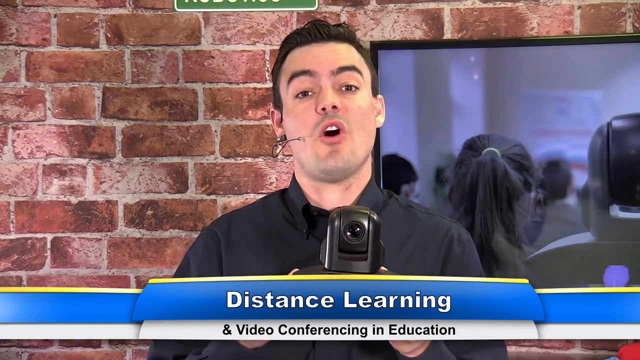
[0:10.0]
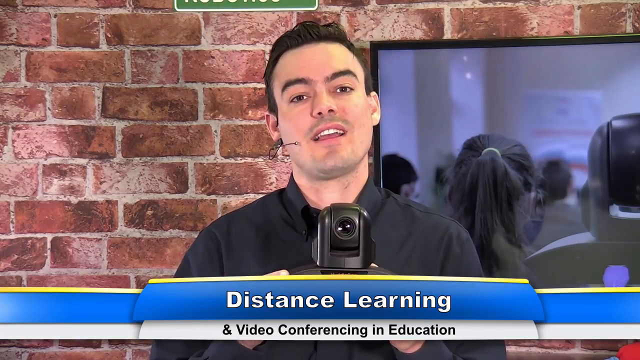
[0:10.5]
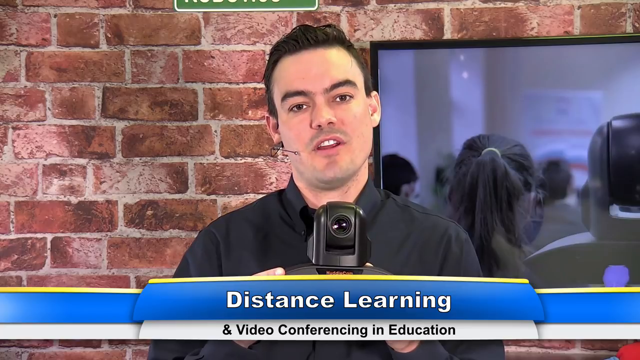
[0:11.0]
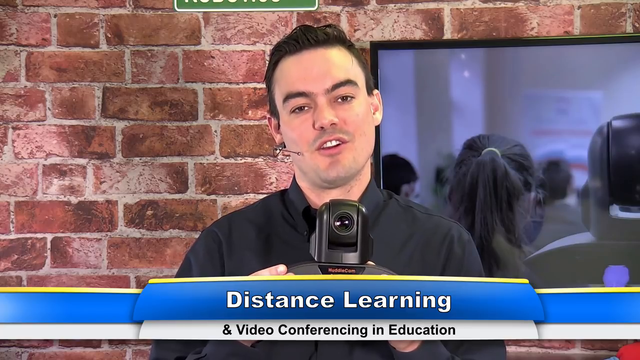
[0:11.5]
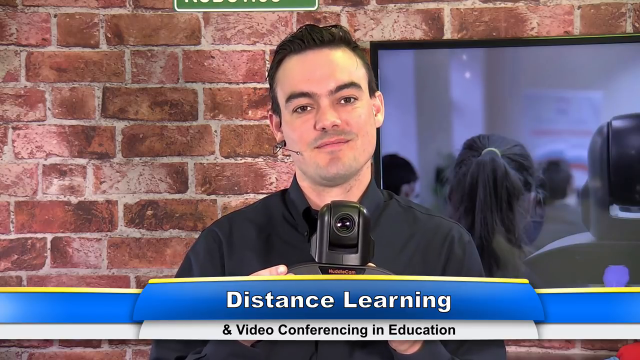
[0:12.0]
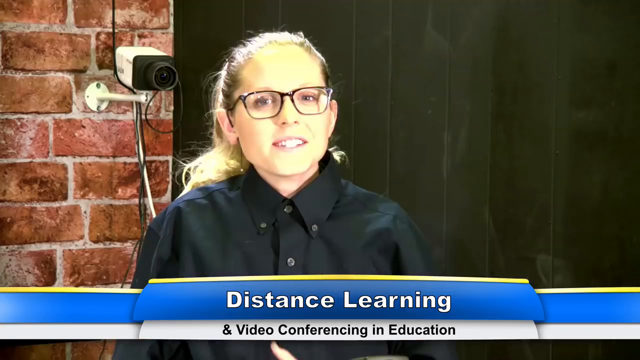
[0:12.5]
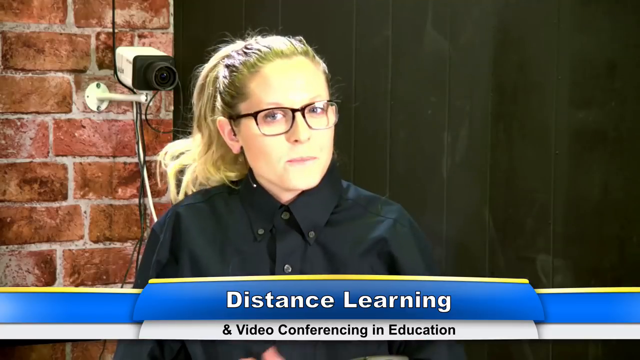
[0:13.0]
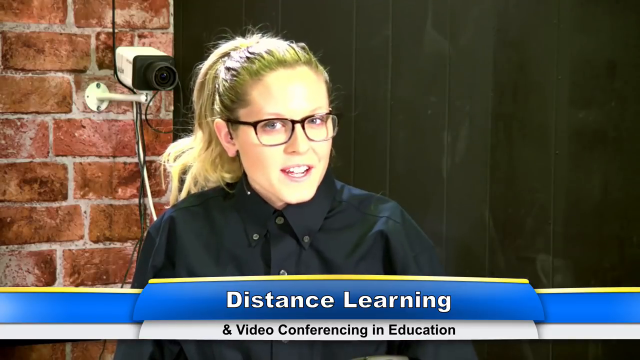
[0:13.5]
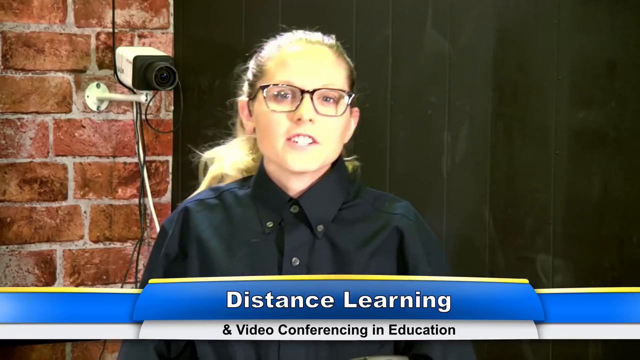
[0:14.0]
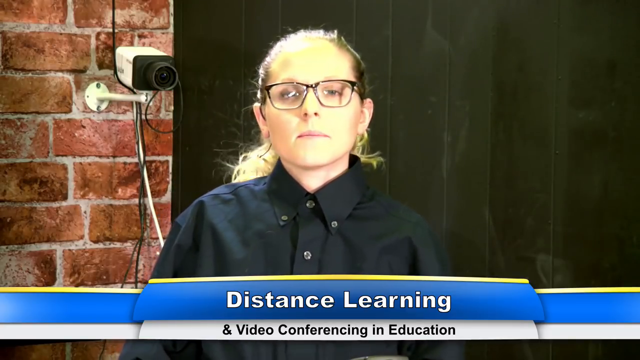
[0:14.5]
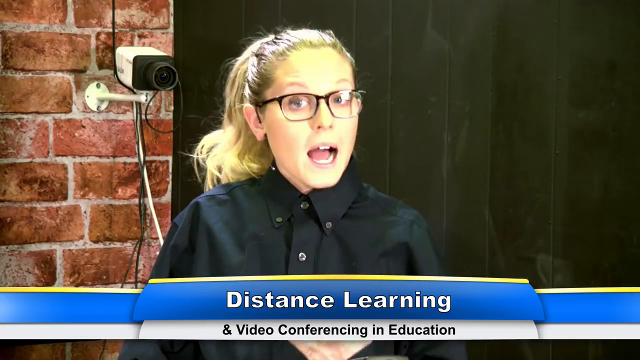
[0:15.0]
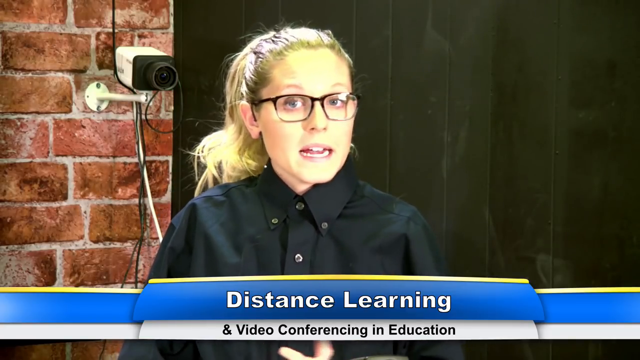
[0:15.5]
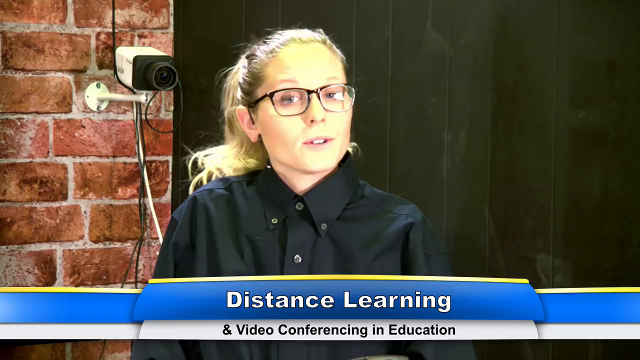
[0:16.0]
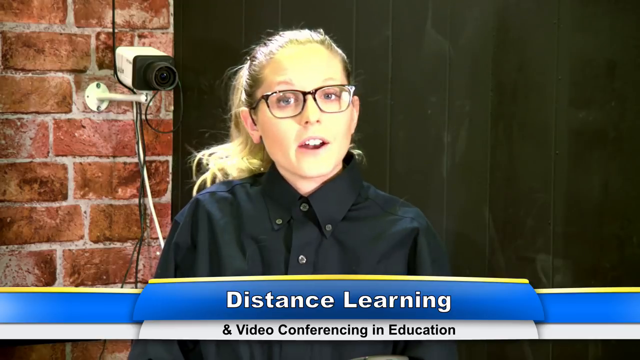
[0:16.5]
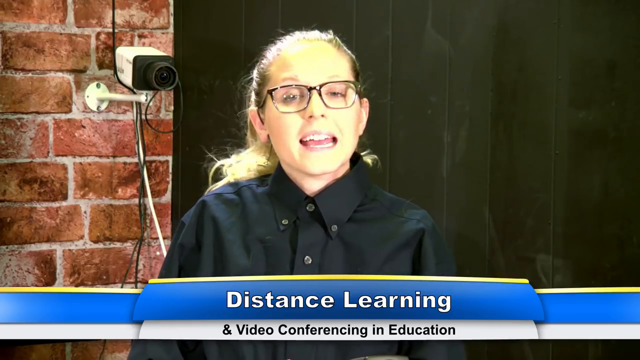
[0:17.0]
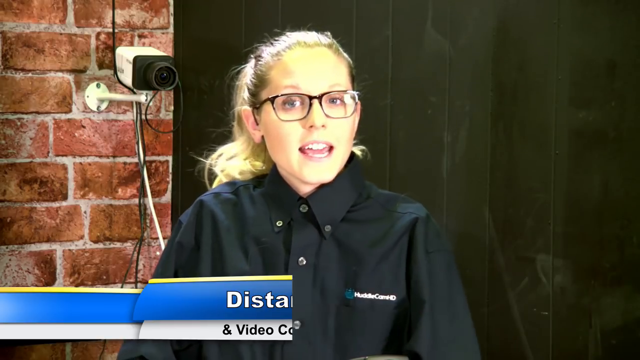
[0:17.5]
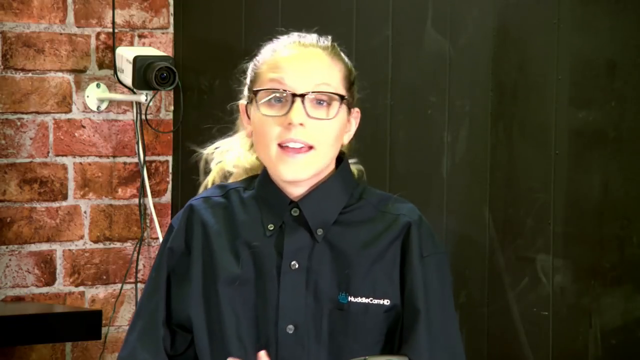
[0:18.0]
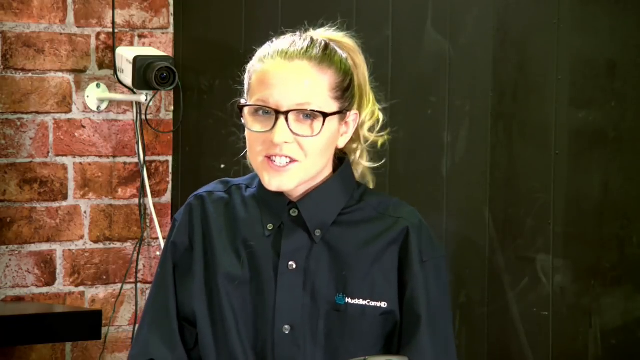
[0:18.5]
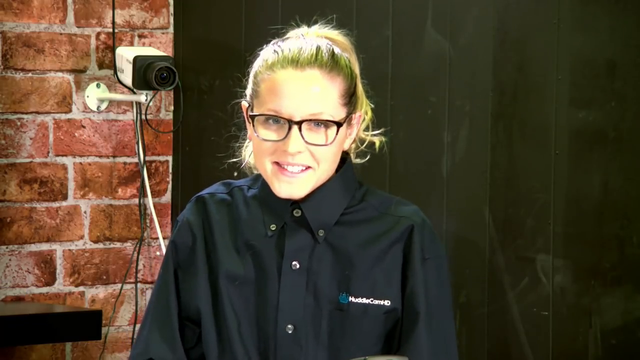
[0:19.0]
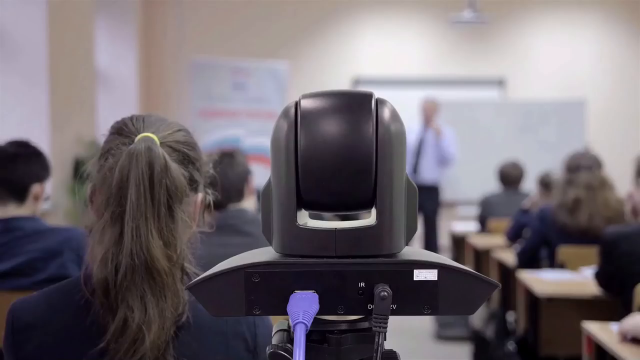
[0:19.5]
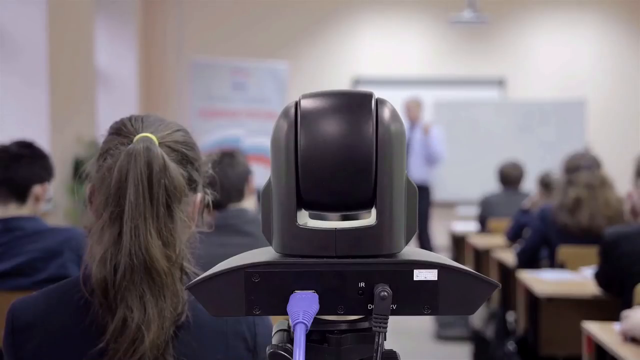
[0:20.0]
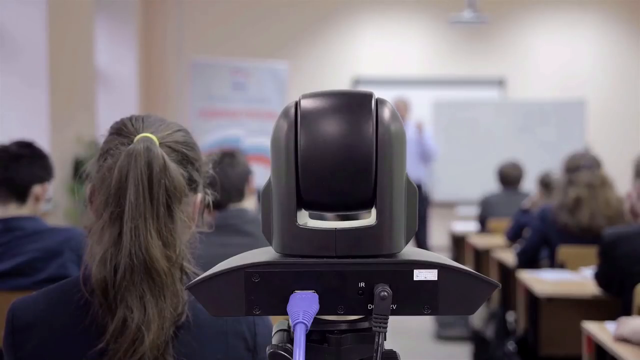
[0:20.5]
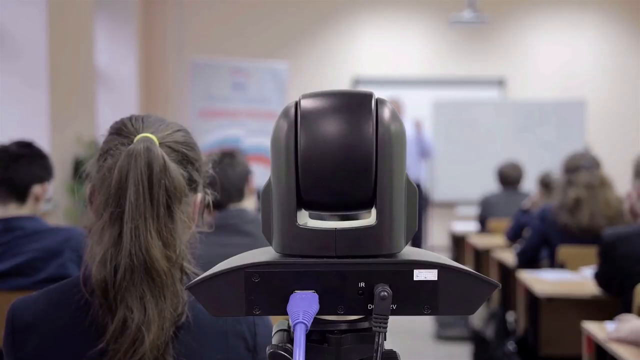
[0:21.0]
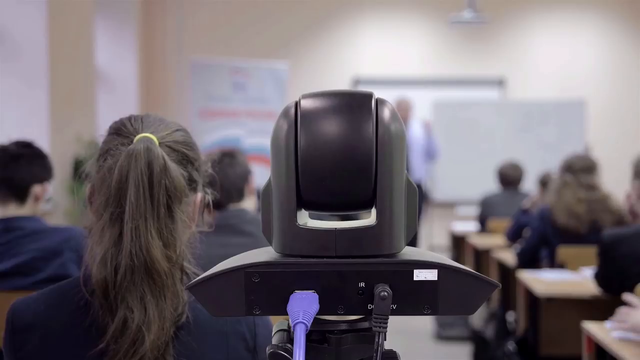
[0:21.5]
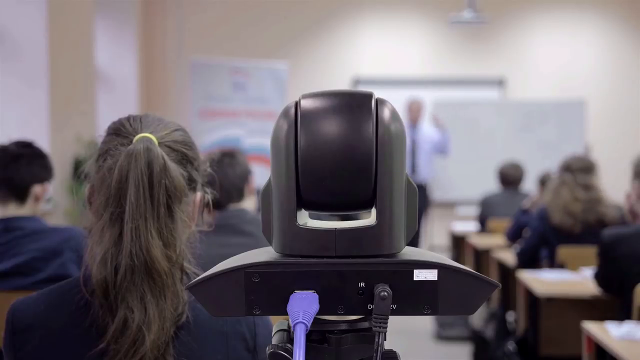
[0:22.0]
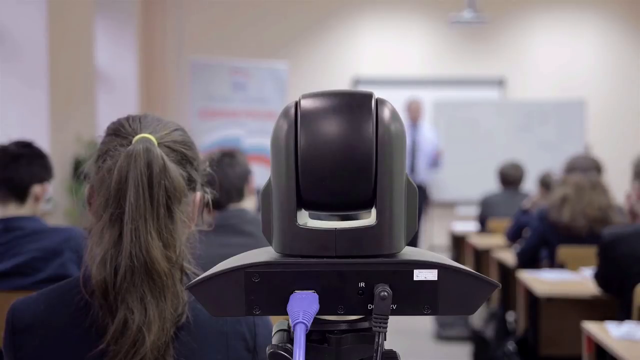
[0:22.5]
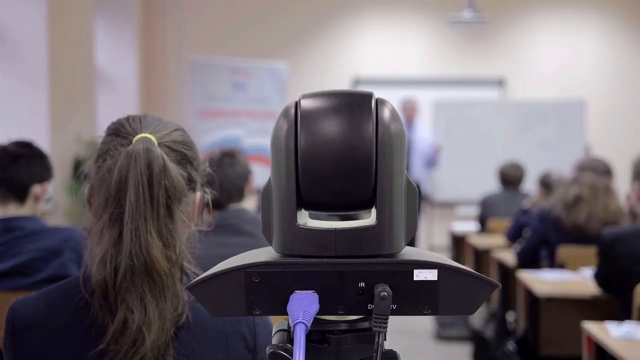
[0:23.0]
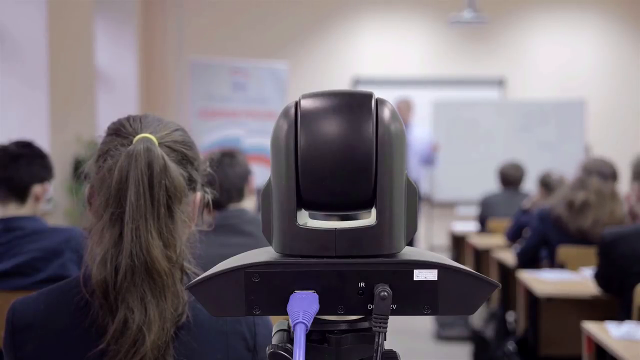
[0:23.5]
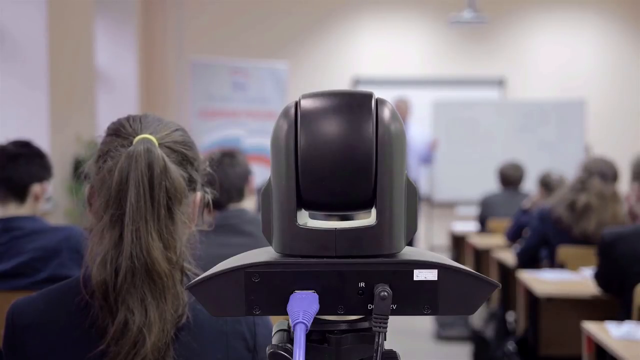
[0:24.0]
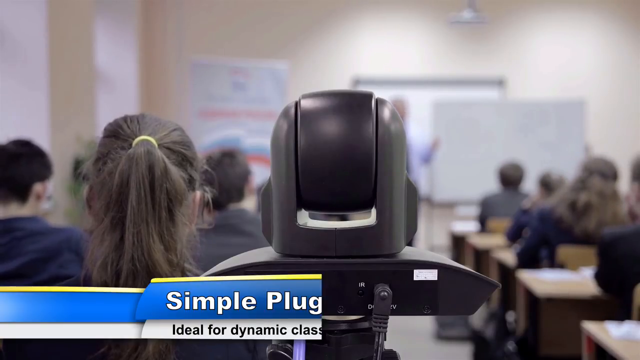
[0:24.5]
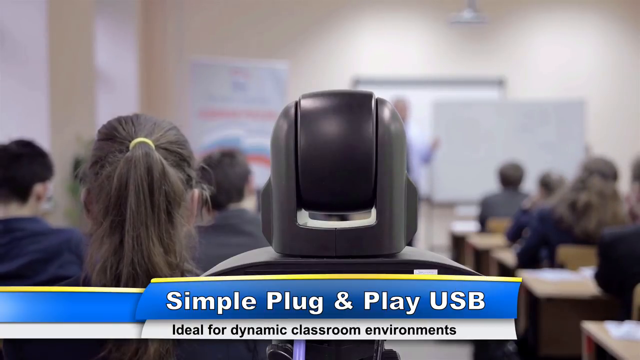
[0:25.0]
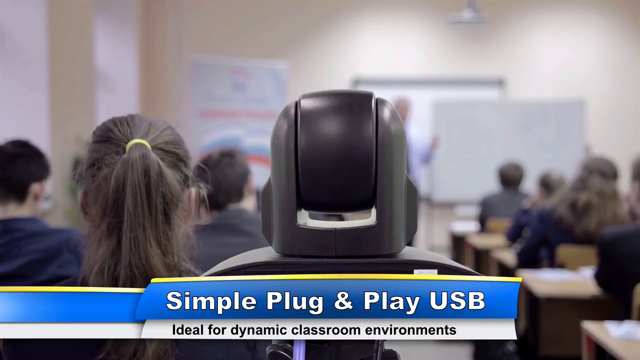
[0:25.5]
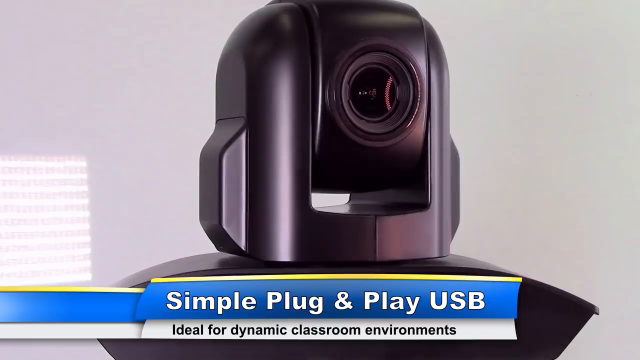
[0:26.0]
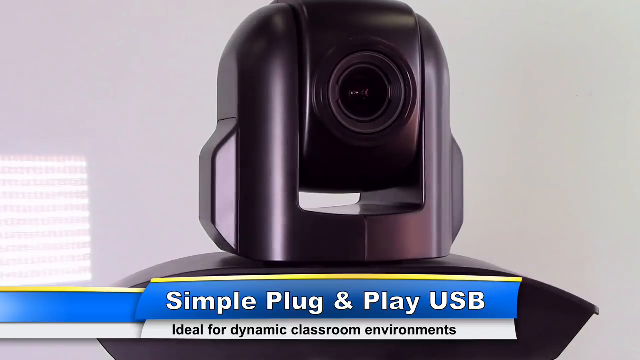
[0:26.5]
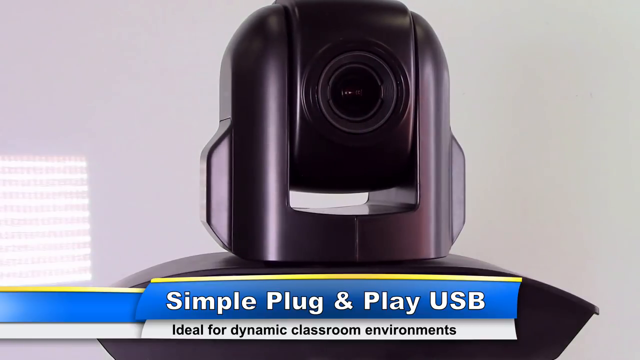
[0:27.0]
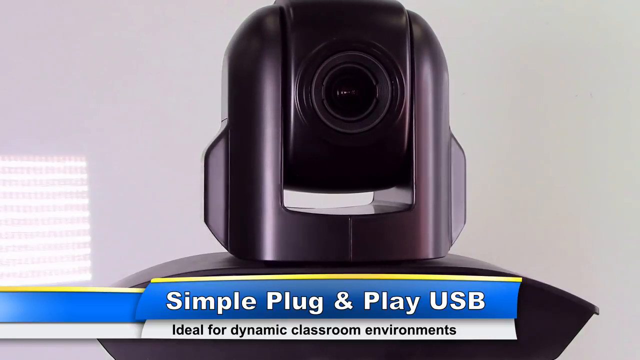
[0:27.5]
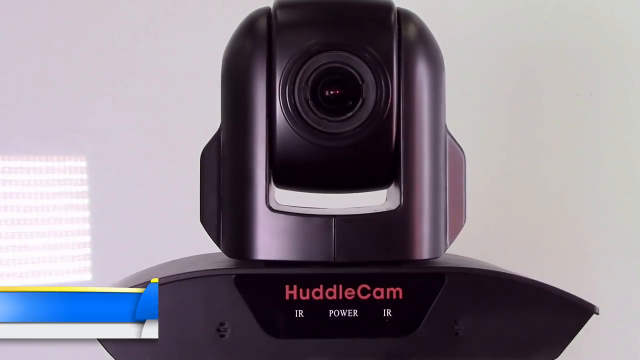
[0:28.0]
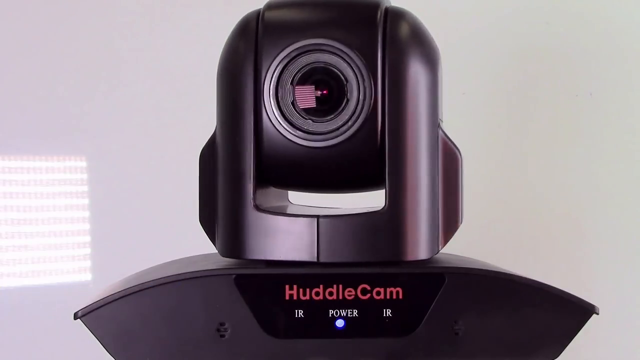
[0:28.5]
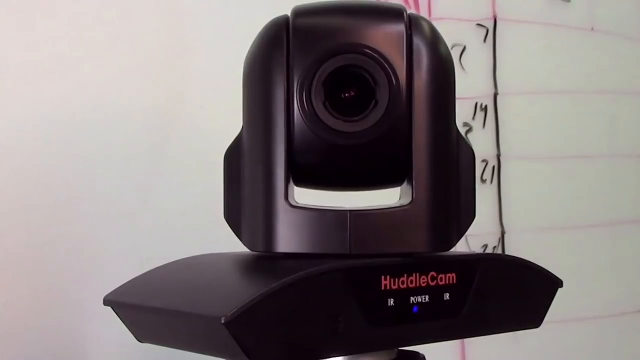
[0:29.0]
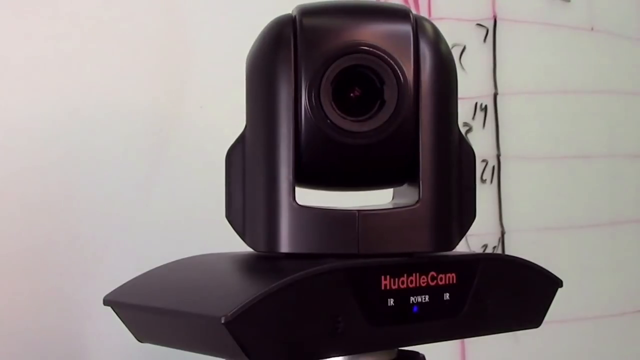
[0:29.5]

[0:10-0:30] The man keeps talking to the camera, zoomed in, still holding the camera device. The shot cuts to the woman, who has a white and black camera set up behind her. She talks to the camera from the same angle, lifts her left hand to gesture, speaks enthusiastically and smiles. The next scene shows a classroom from a first-person perspective, with the back of the camera device blocking the middle of the view; a purple cord is plugged in on the left and a black cord on the right. A blurry professor in the background talks to the class, who sit at desks and are seen from behind. The device is a simple plug-and-play USB, ideal for dynamic classroom activities. The small camera device then rotates slowly in both directions.